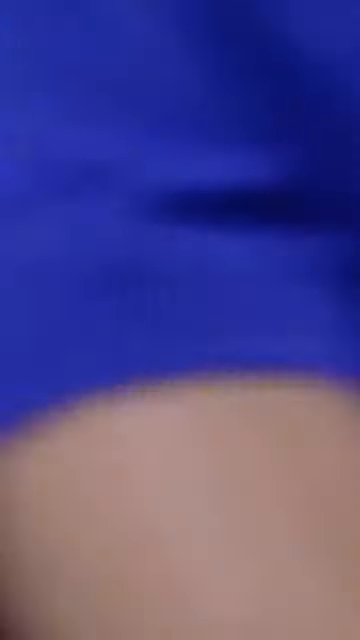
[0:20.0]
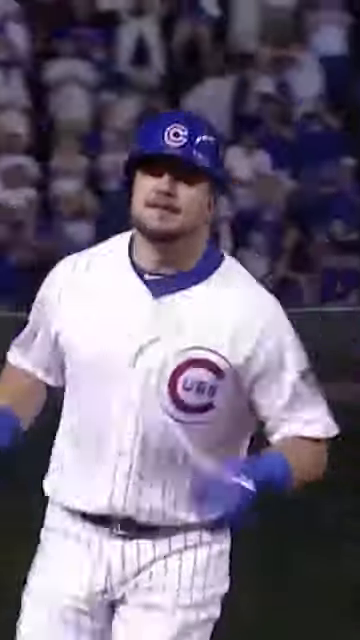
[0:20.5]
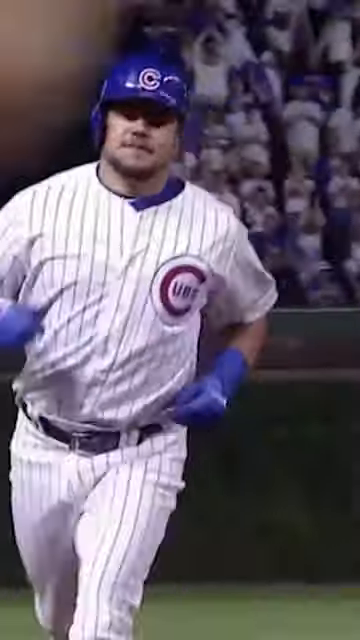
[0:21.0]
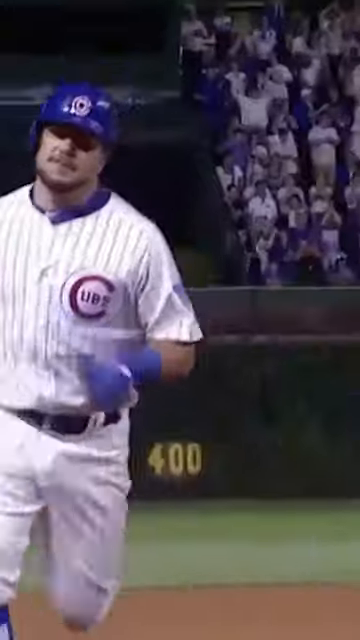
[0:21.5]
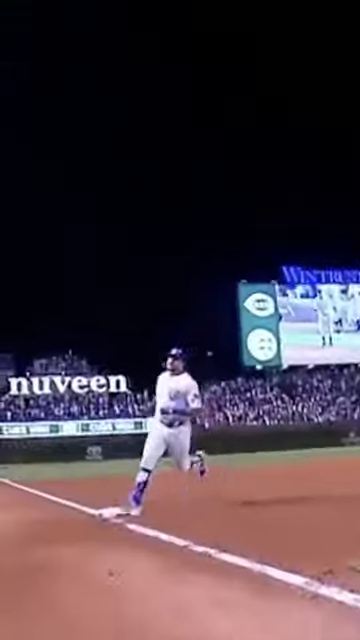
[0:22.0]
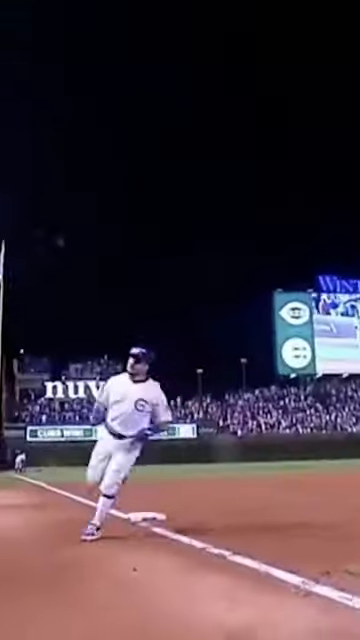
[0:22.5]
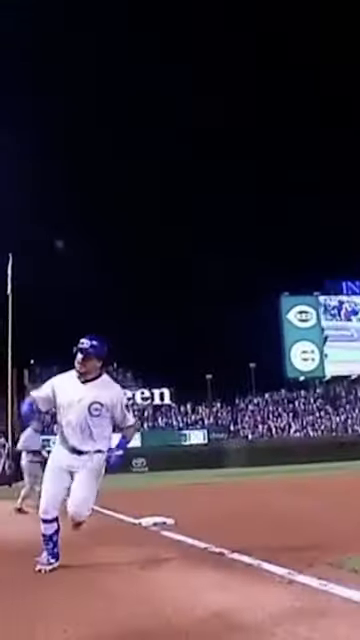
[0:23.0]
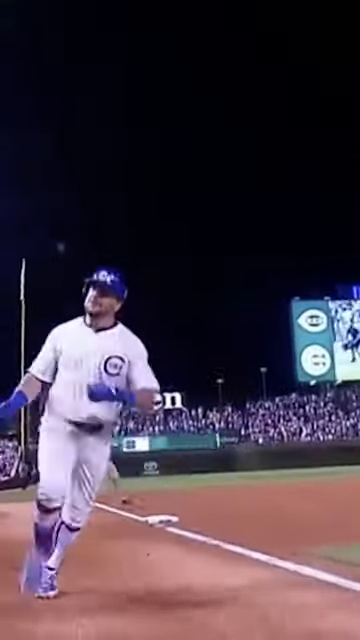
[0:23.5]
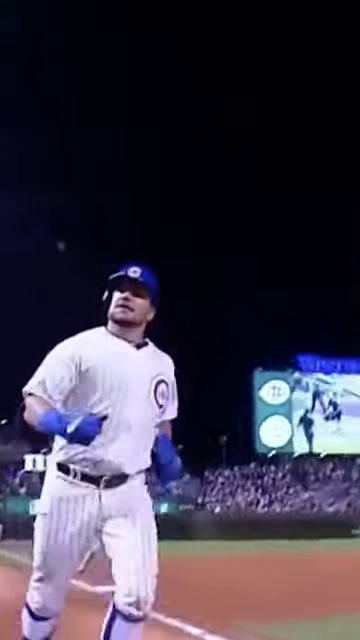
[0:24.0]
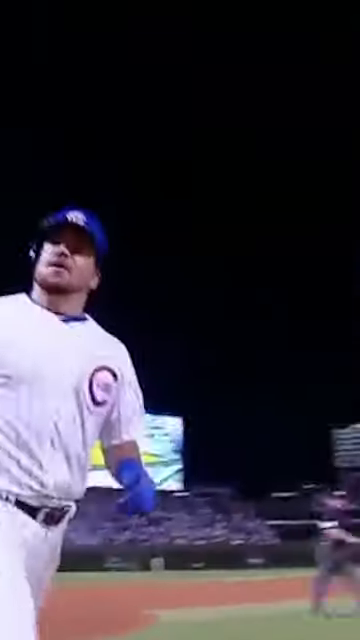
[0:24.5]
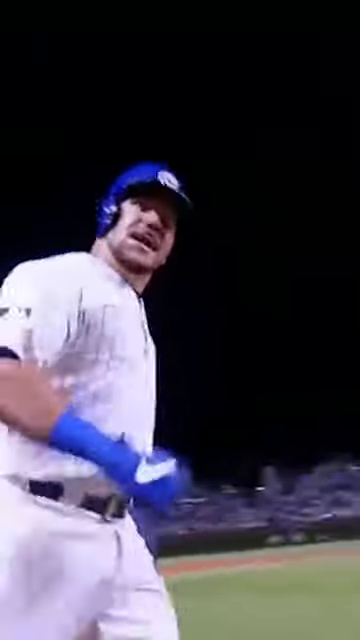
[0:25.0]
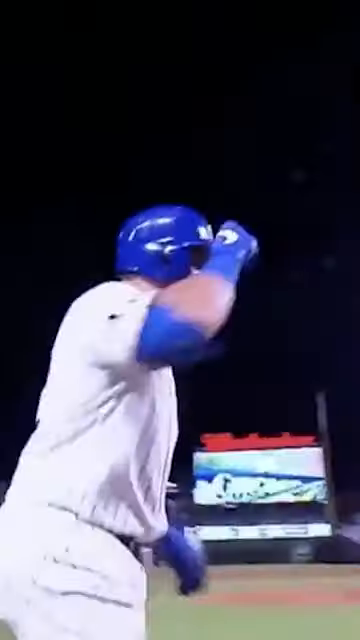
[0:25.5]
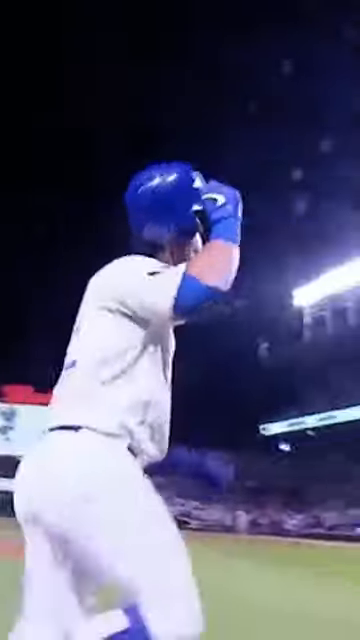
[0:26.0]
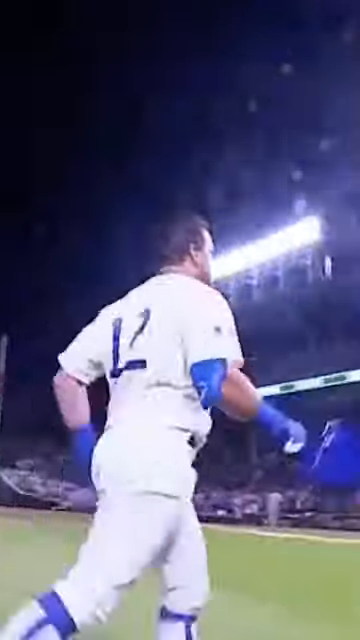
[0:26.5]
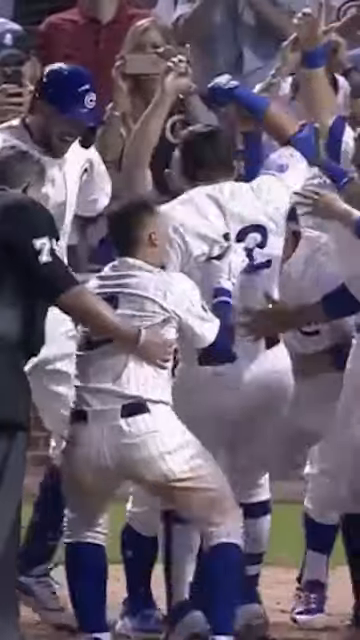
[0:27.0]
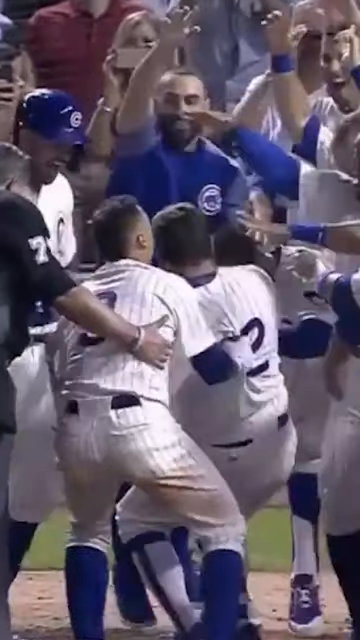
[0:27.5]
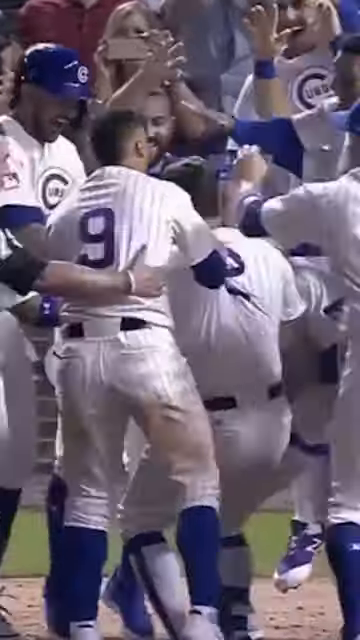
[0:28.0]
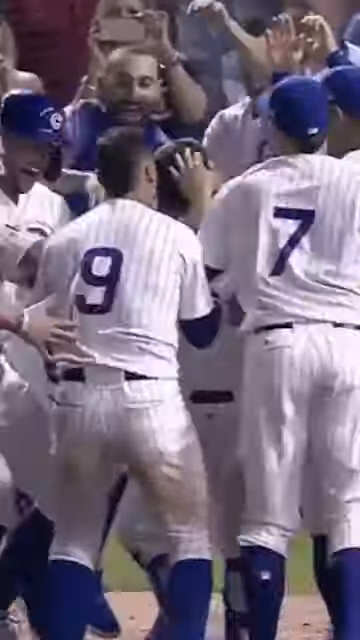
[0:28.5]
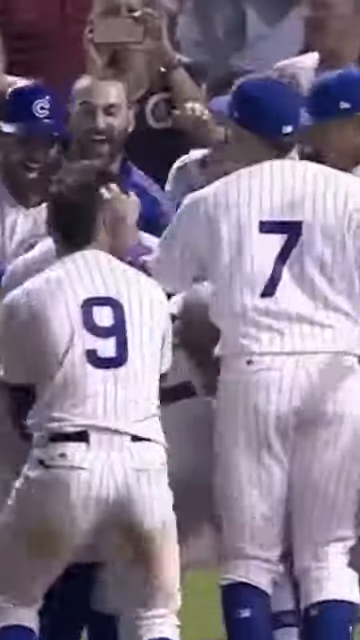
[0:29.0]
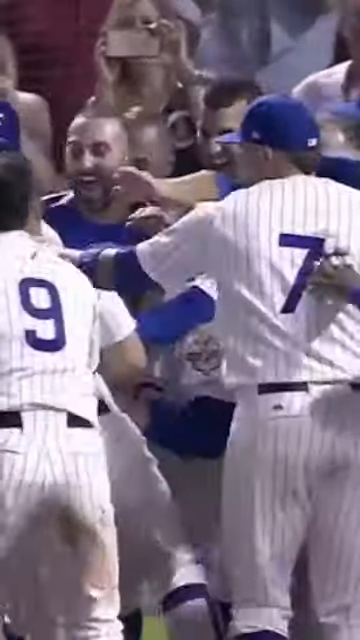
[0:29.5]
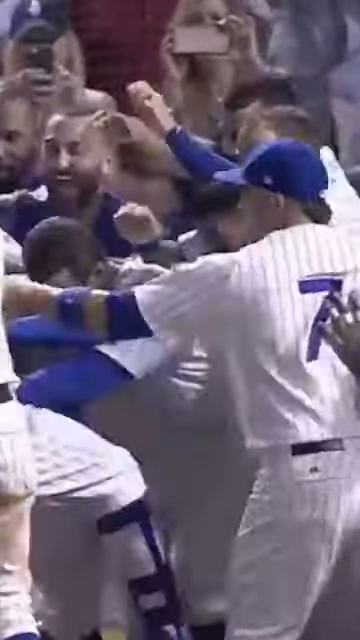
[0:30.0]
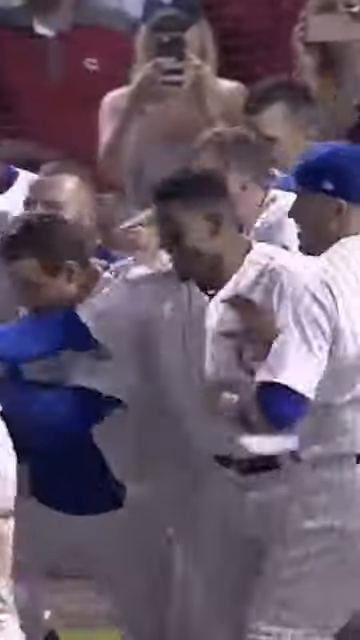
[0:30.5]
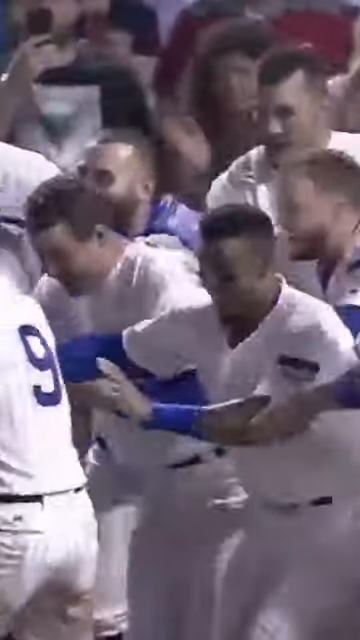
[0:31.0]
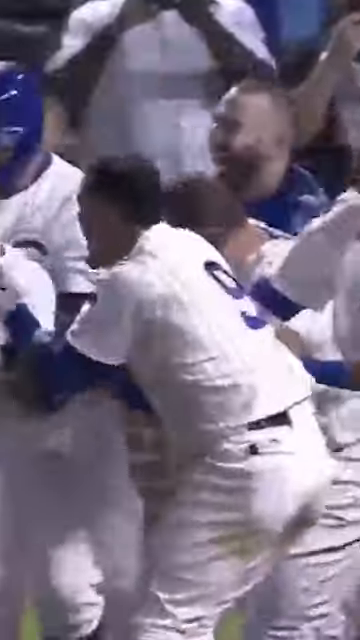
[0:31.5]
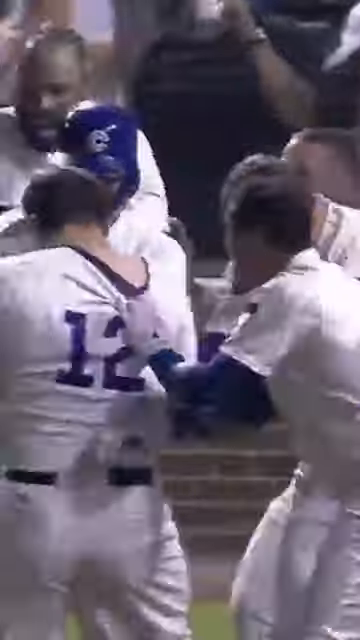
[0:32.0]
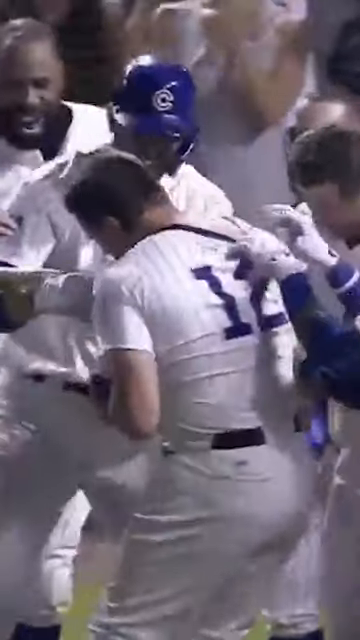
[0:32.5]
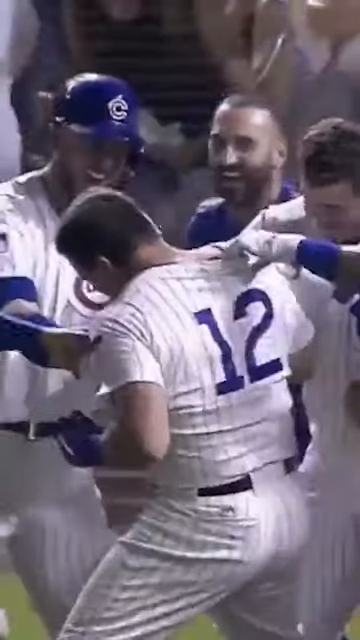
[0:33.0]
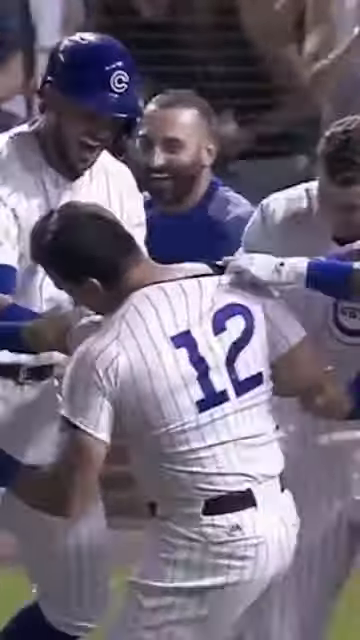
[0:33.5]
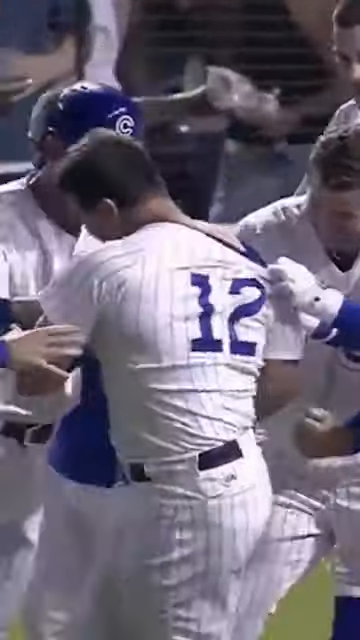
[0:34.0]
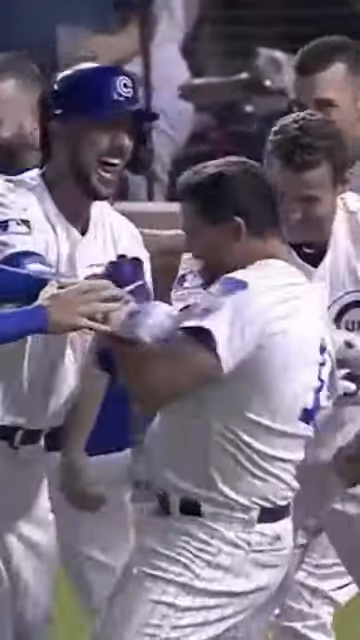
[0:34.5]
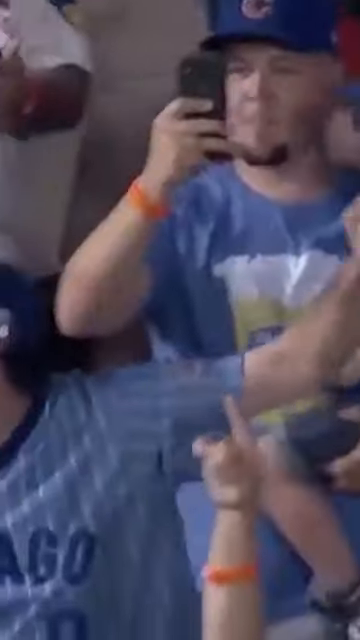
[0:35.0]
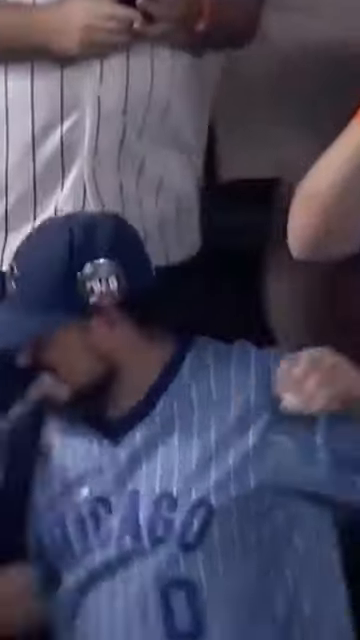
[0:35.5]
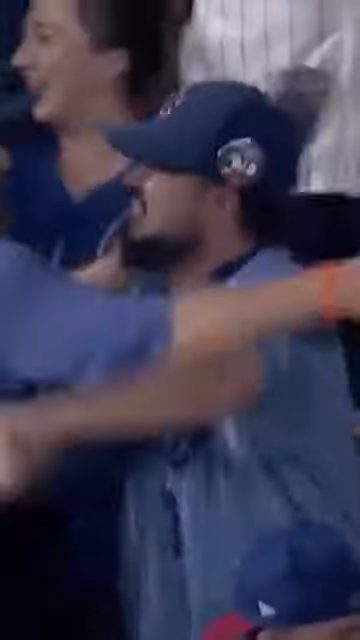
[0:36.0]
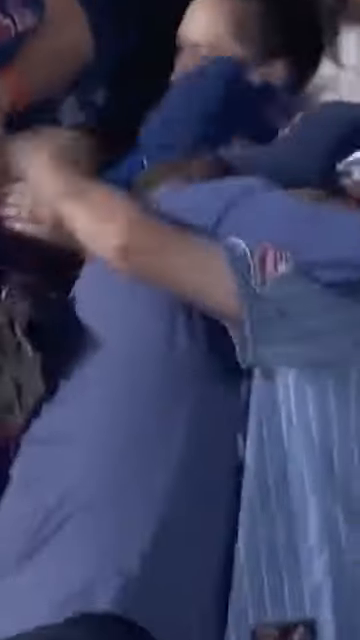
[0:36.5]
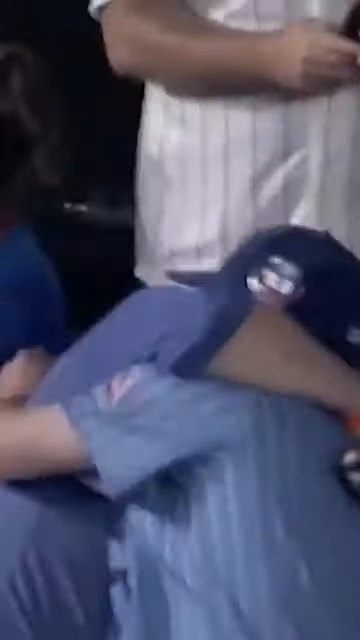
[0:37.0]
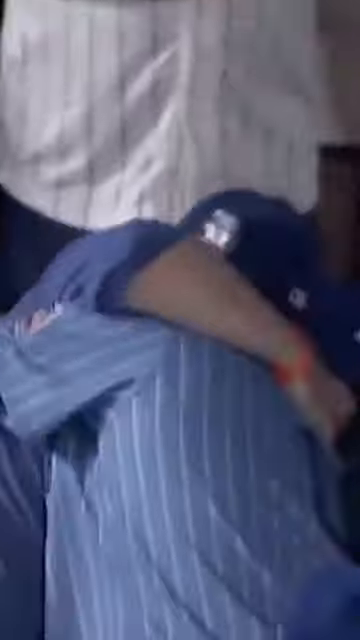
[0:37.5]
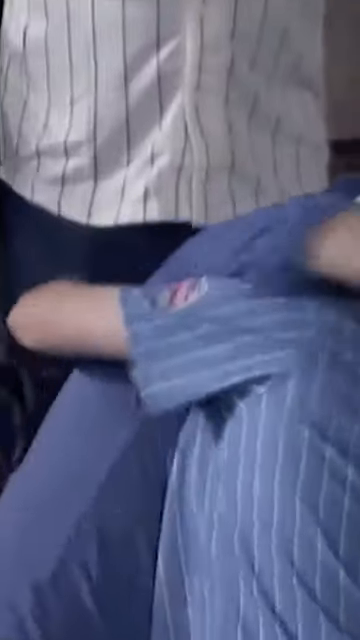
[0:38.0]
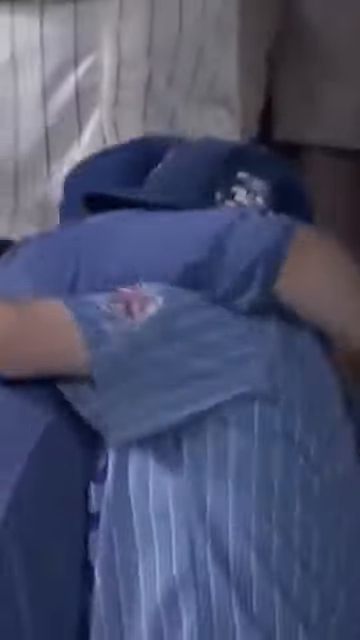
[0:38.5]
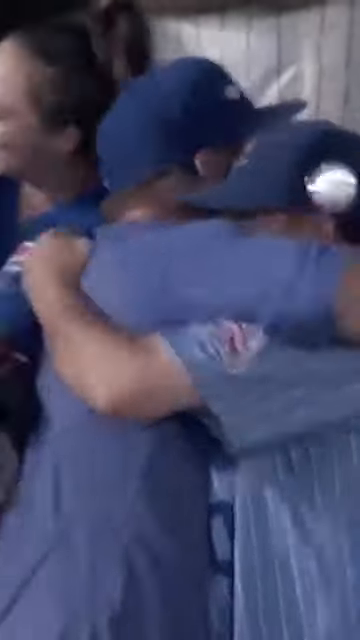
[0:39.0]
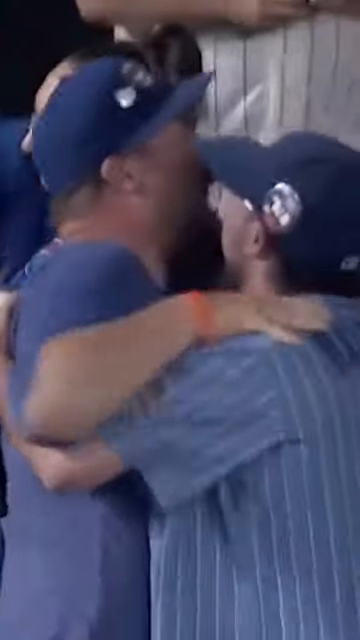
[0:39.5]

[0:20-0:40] The batter, number 12, runs the bases, very excited, talking to the crowd and to his team. He then joins a huddle of teammates who congratulate him, like a little mosh pit, and he is cheered on by his fellow teammates. The fans are excited. The fan who caught the ball over the fence is hugging a friend or another fan. Everybody is celebrating in Chicago. The scoreboard cannot be made out.